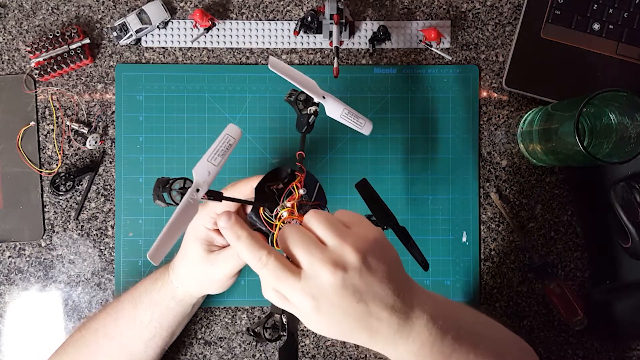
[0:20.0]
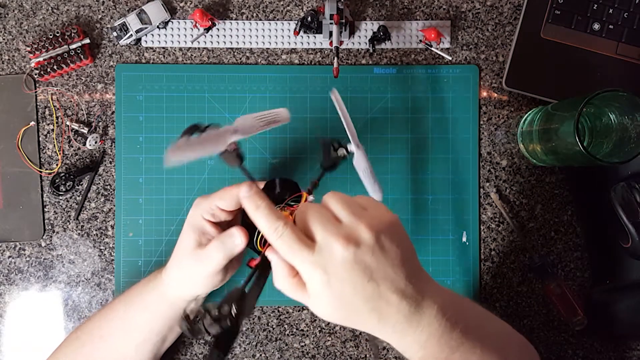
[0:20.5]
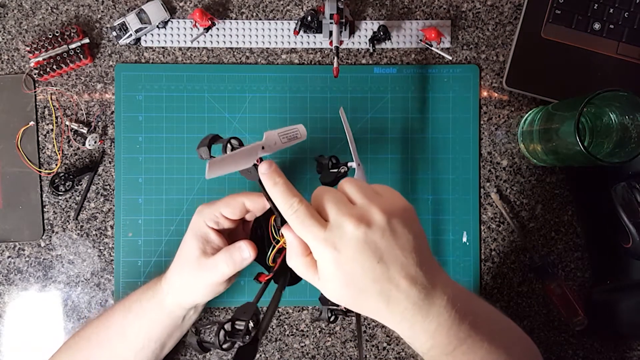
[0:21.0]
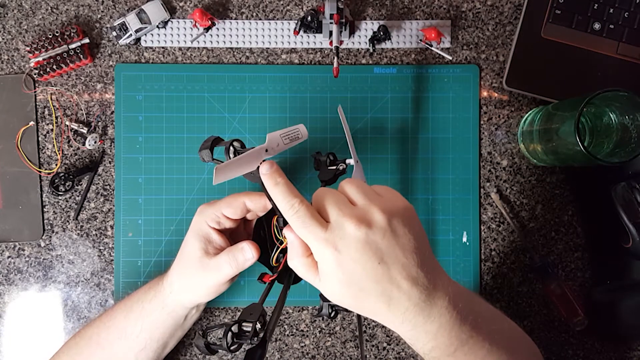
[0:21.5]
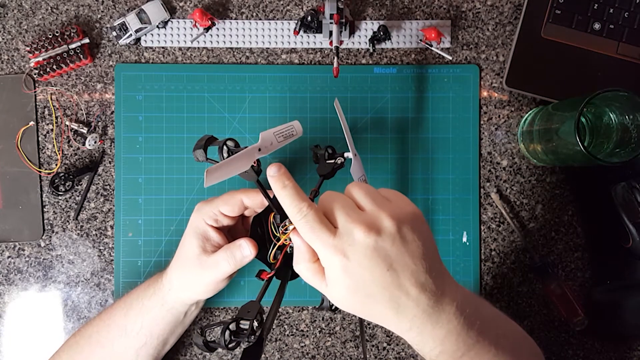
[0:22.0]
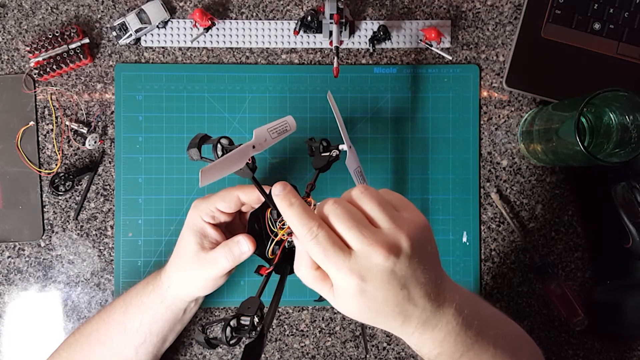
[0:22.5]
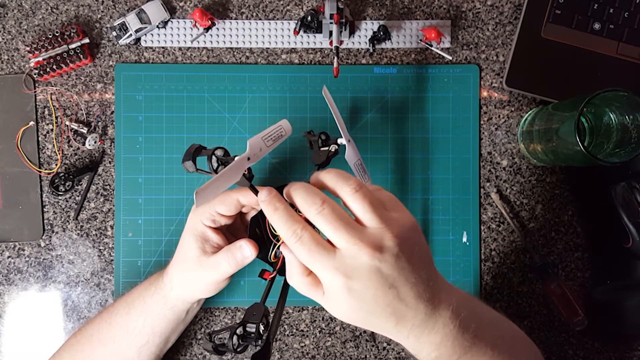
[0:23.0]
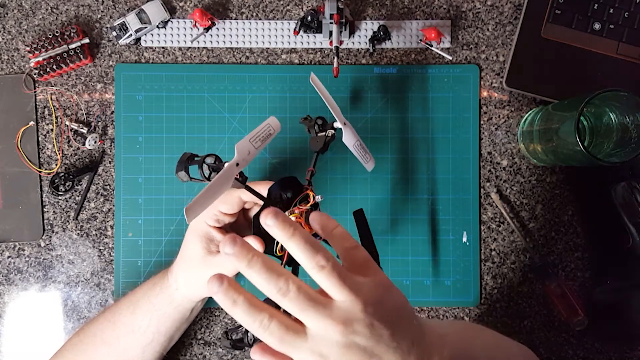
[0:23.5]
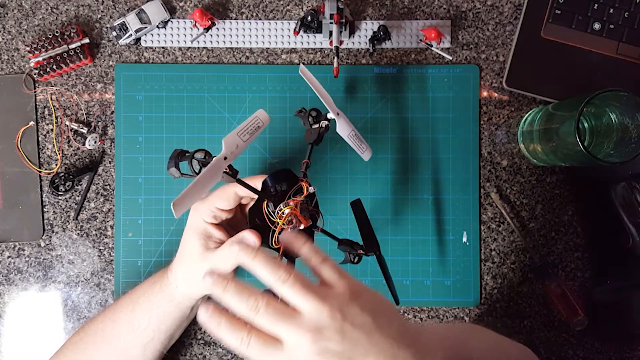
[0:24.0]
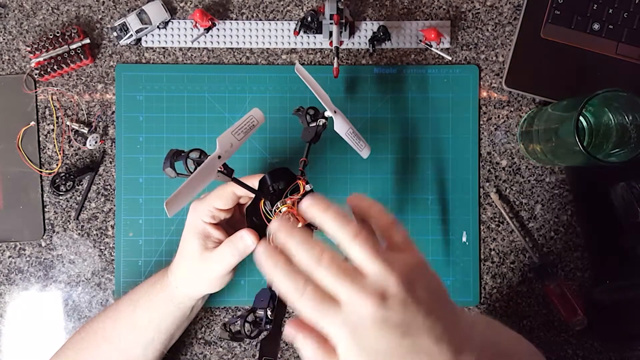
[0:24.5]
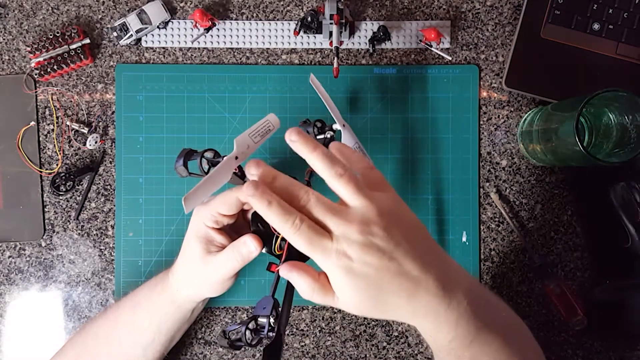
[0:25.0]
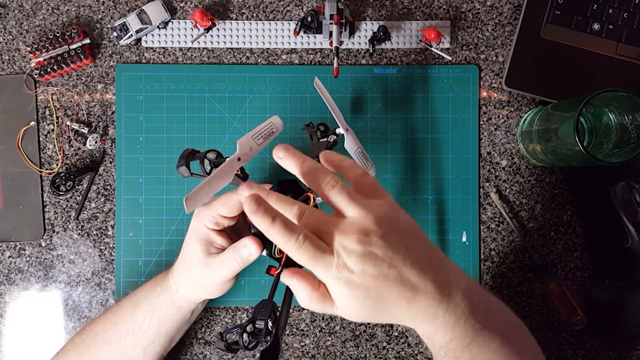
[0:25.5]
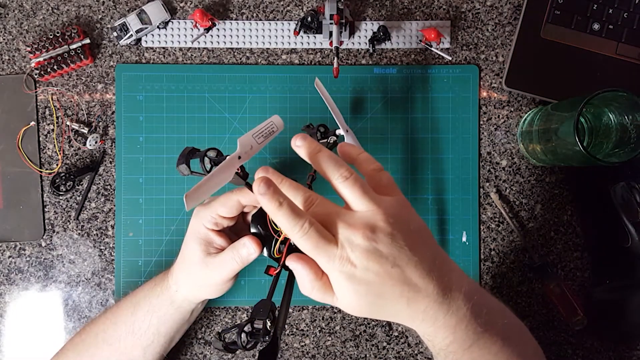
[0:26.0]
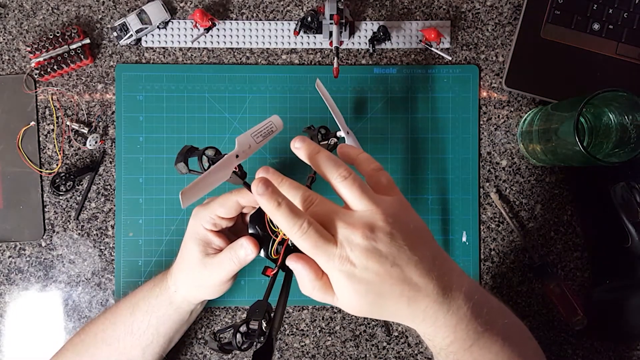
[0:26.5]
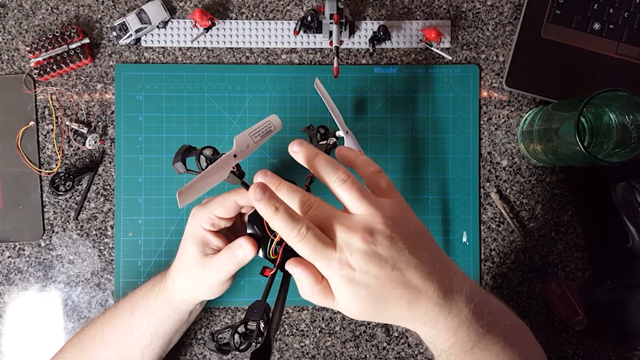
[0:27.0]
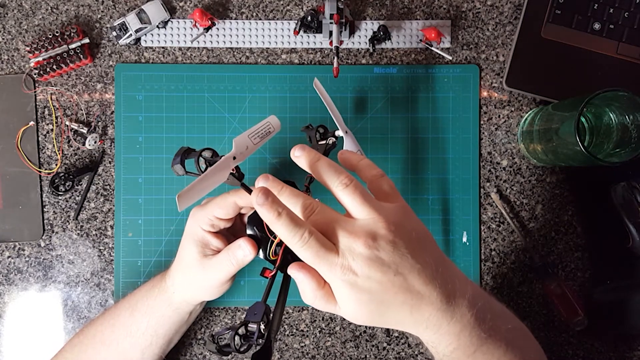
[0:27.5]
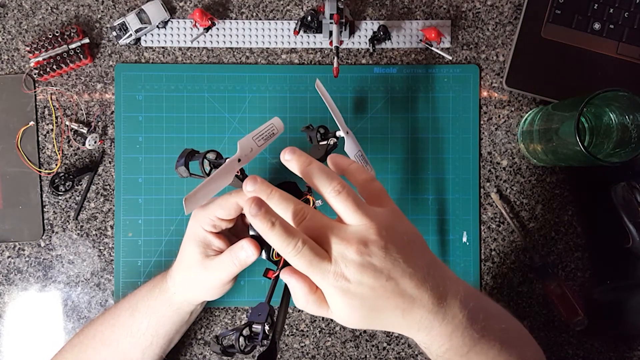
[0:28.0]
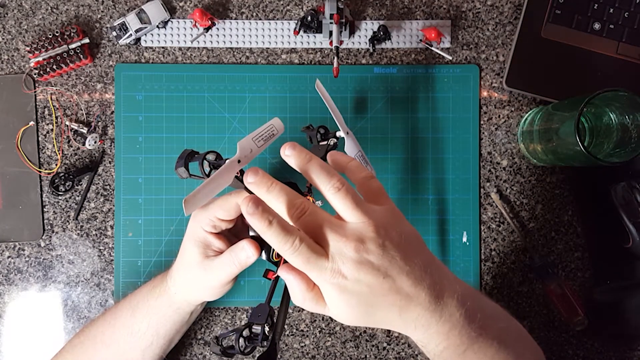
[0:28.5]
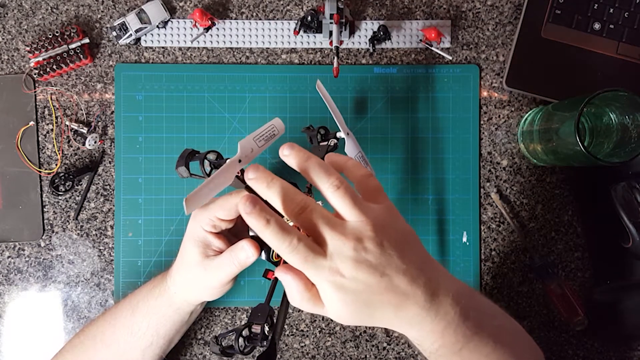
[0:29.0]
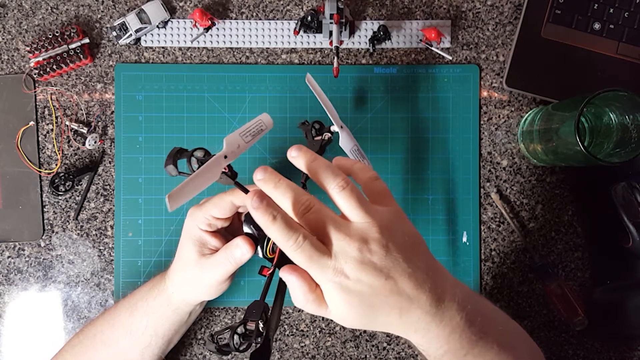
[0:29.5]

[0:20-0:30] The person holding the drone continuously points at certain parts of it, which seem to be malfunctioning or faulty parts. He seems to be showing how to fix the drone. The drone is the main focus and appears to be under repair.